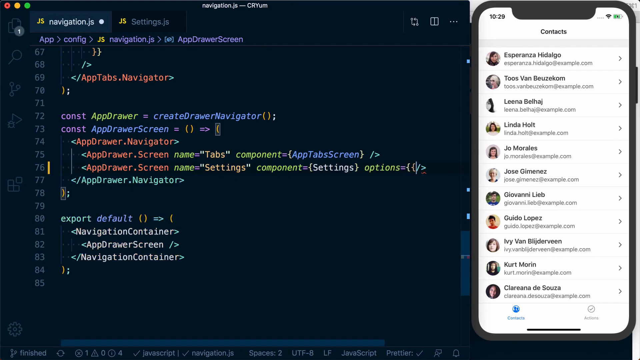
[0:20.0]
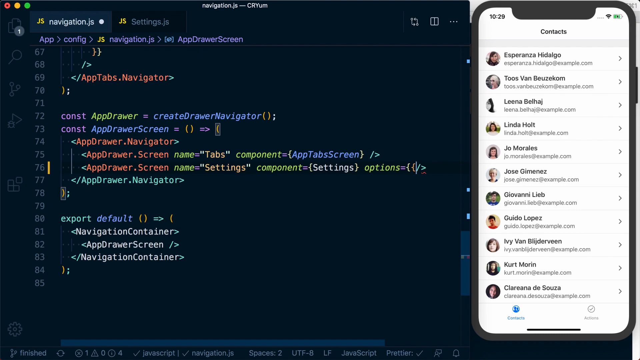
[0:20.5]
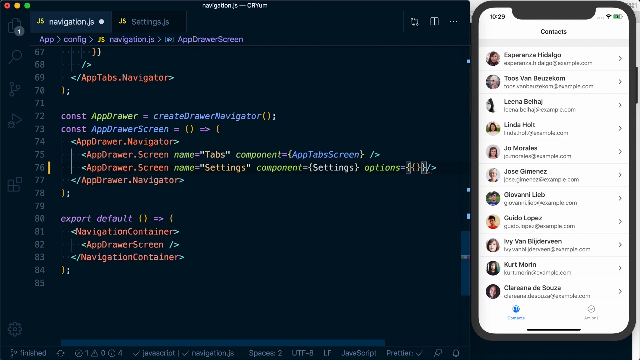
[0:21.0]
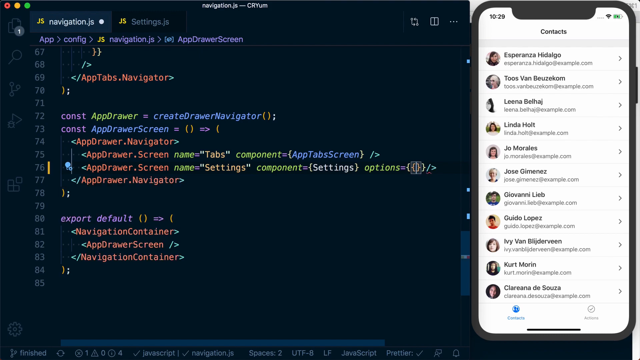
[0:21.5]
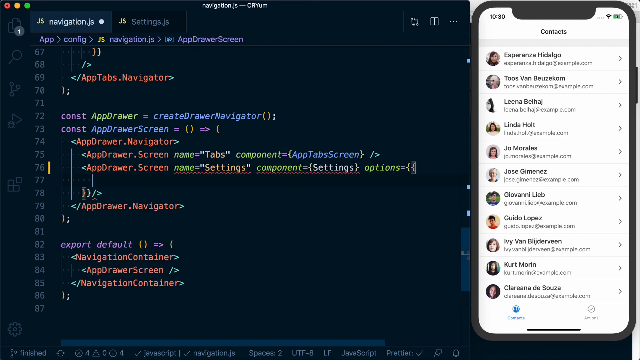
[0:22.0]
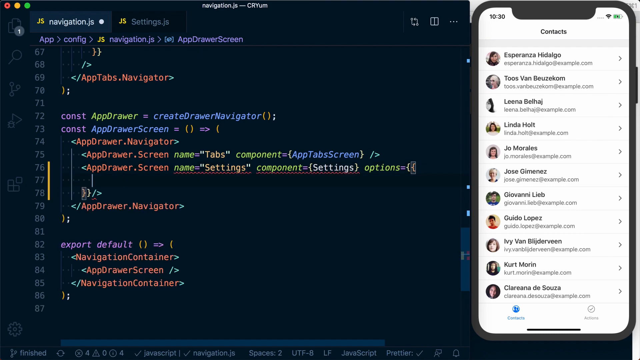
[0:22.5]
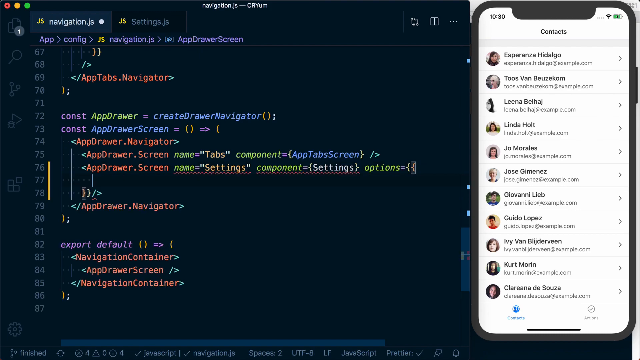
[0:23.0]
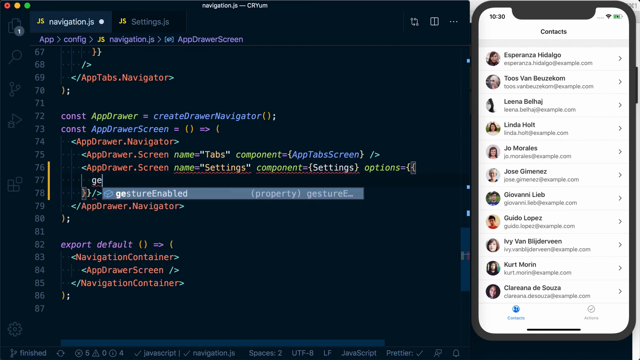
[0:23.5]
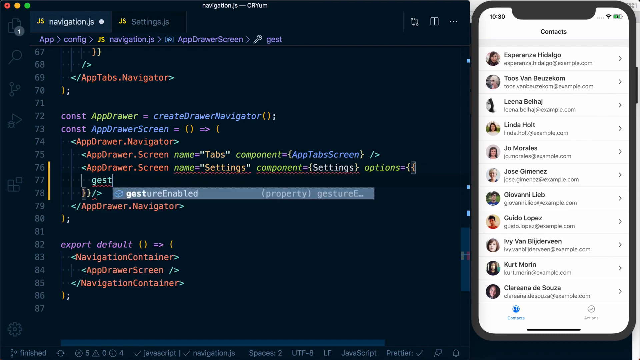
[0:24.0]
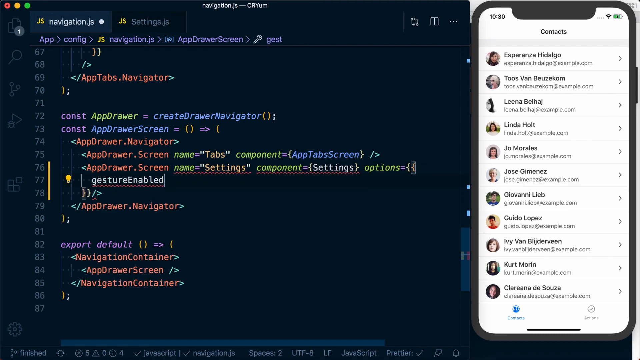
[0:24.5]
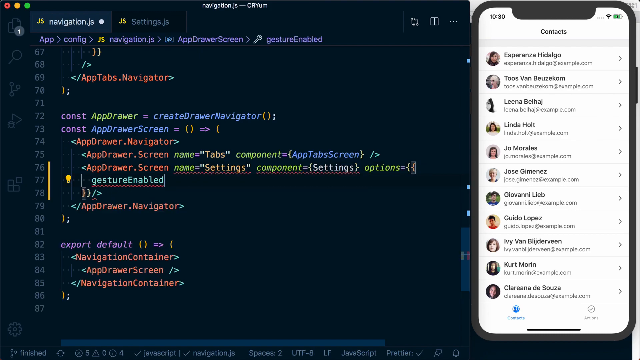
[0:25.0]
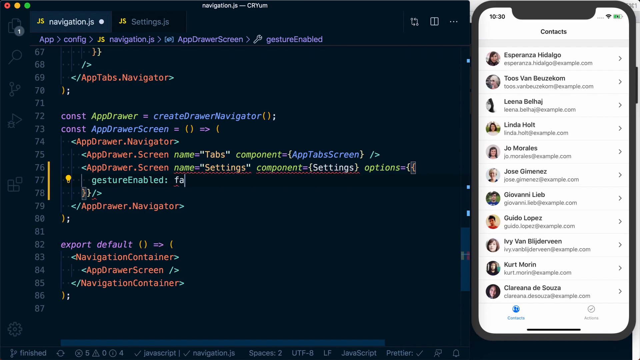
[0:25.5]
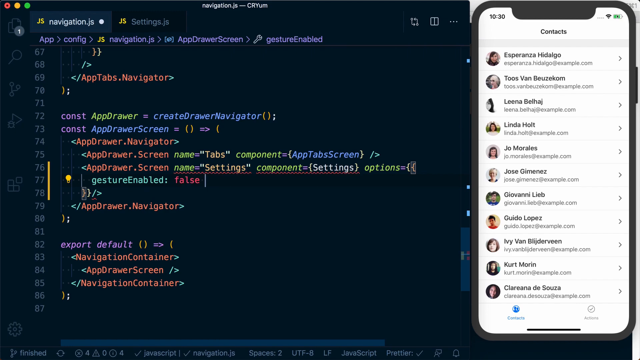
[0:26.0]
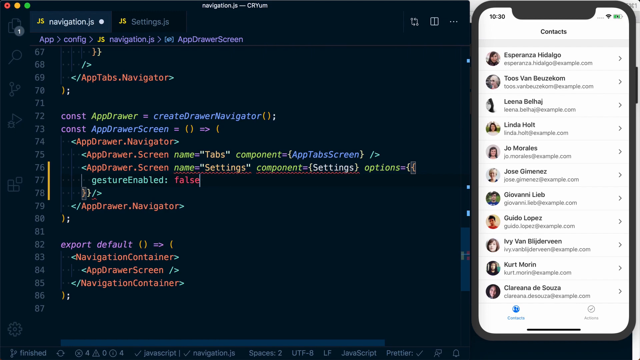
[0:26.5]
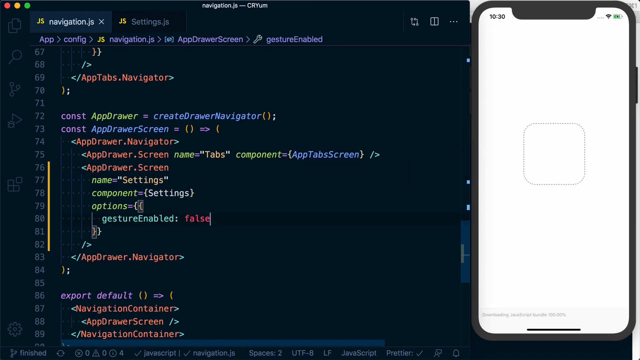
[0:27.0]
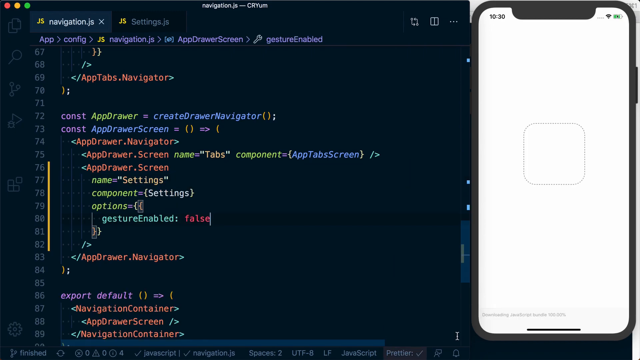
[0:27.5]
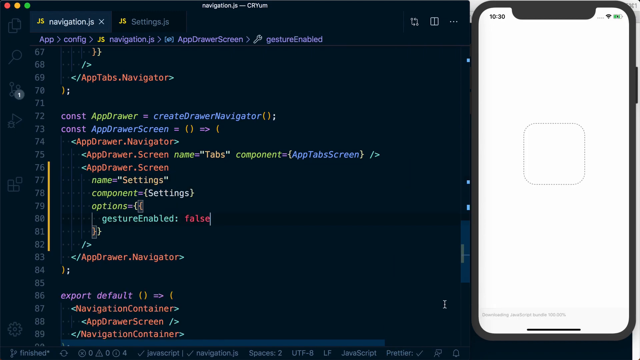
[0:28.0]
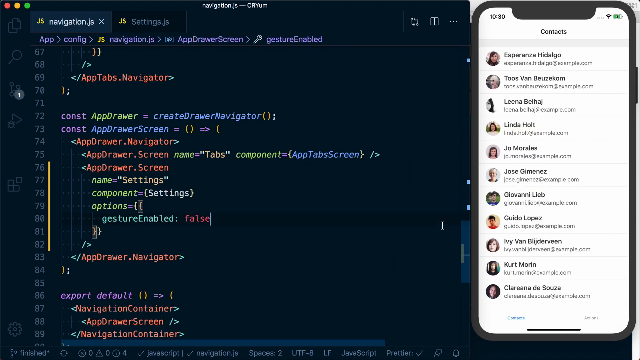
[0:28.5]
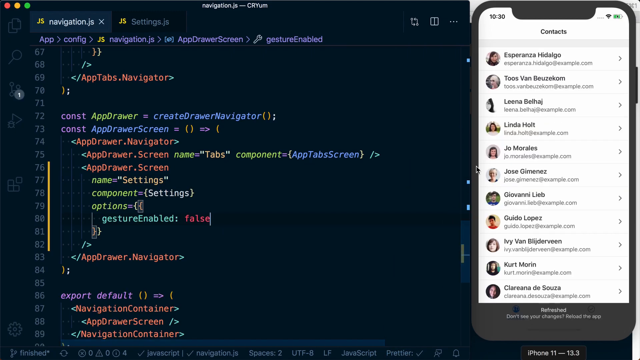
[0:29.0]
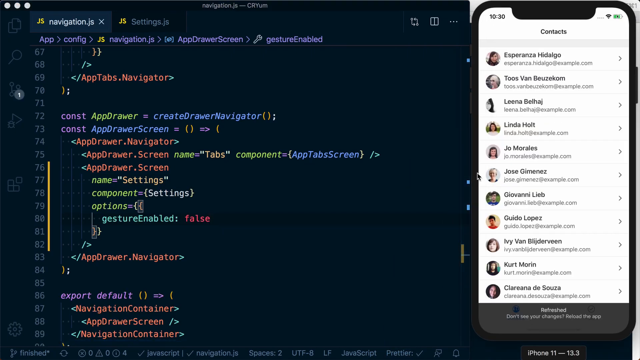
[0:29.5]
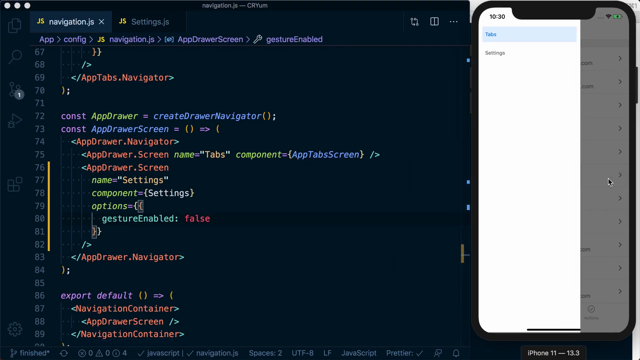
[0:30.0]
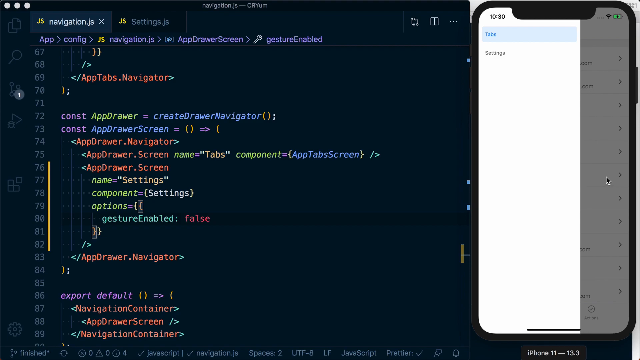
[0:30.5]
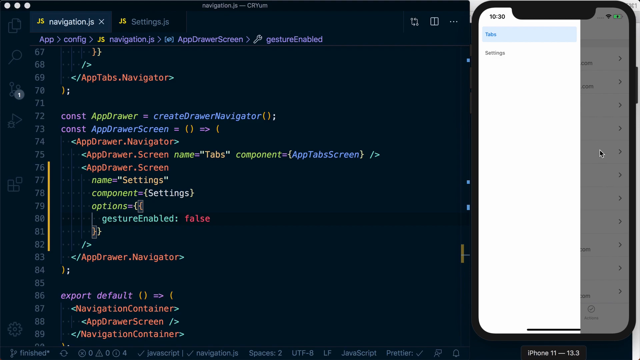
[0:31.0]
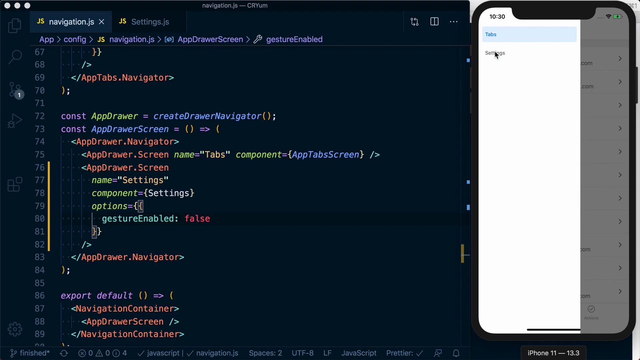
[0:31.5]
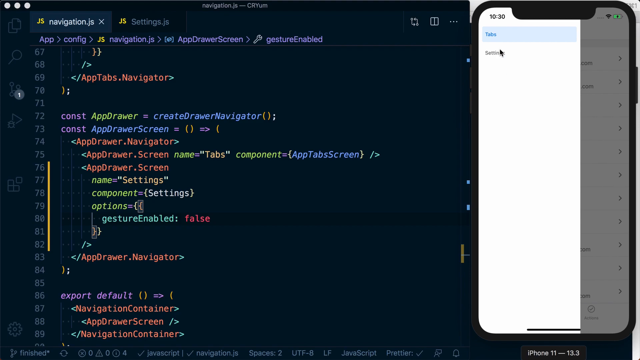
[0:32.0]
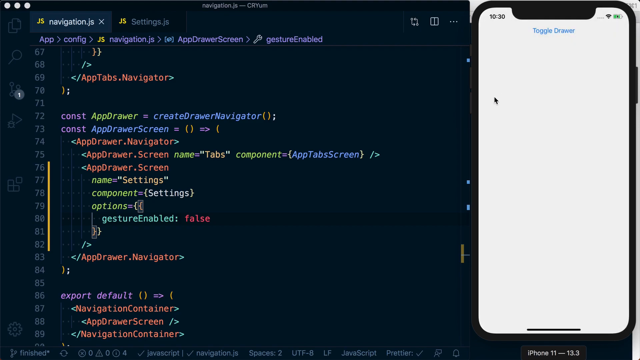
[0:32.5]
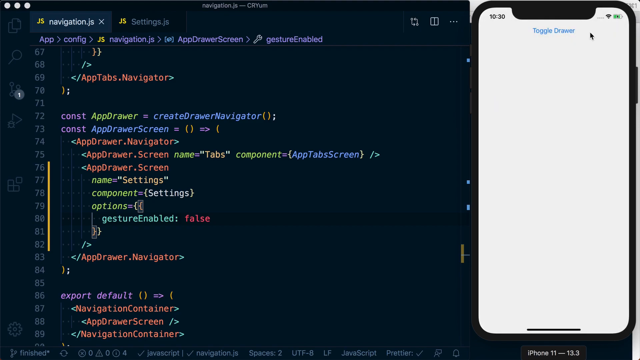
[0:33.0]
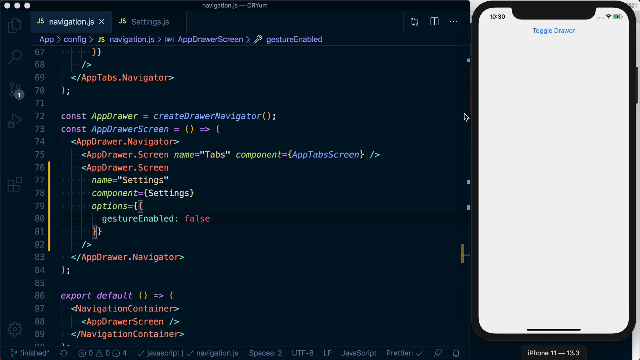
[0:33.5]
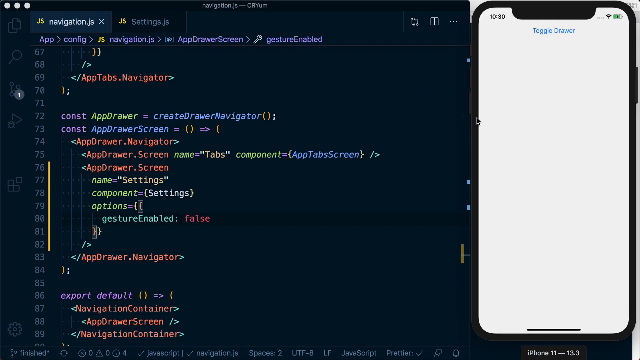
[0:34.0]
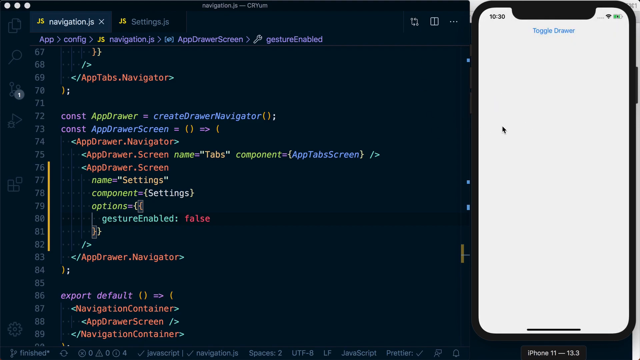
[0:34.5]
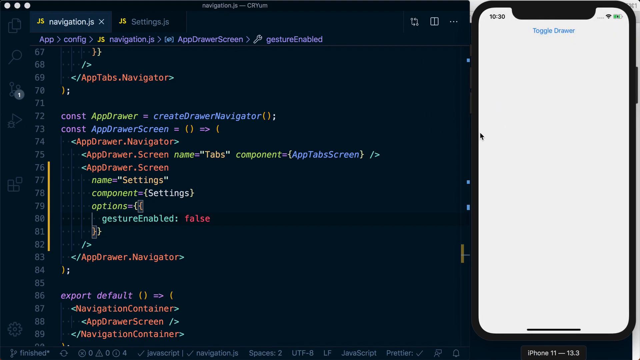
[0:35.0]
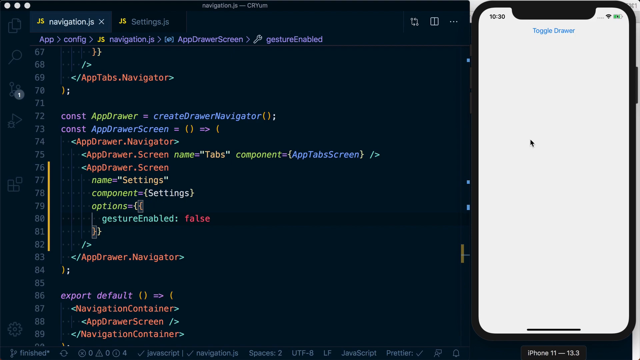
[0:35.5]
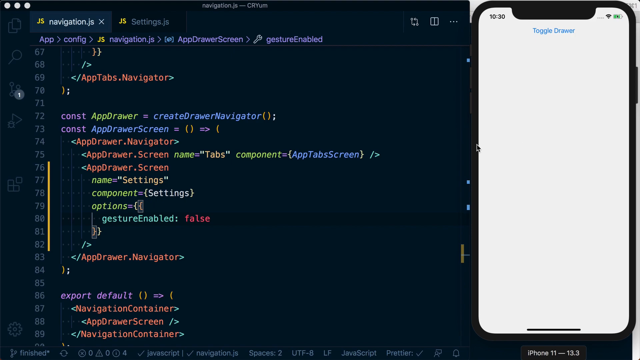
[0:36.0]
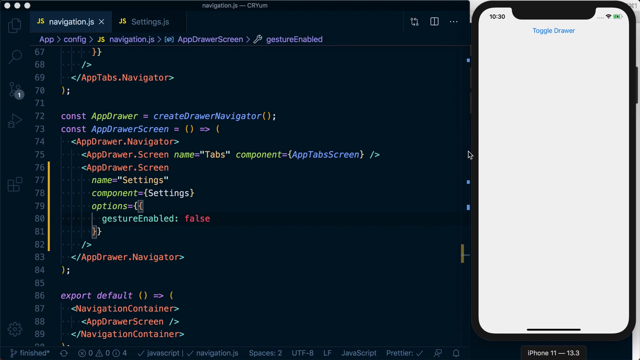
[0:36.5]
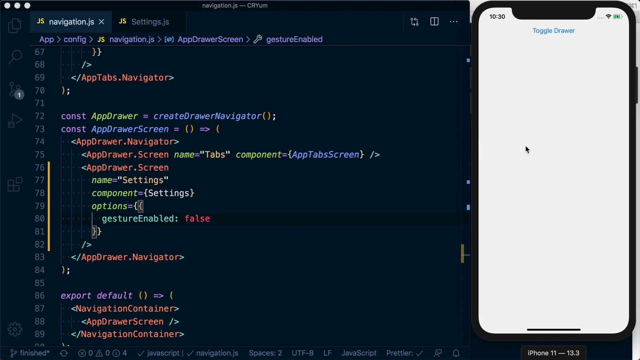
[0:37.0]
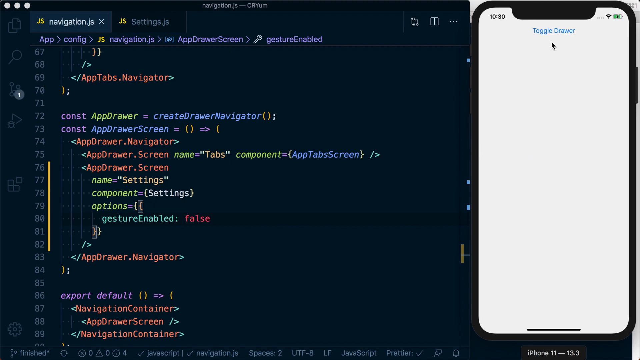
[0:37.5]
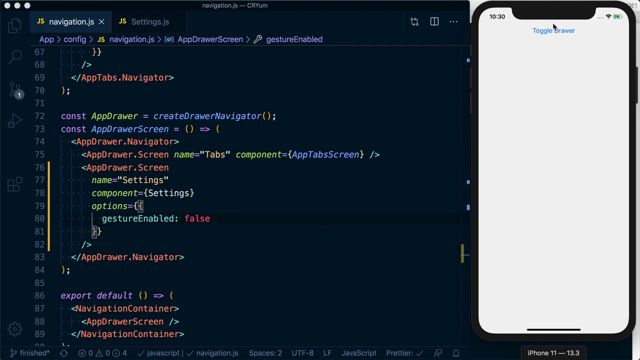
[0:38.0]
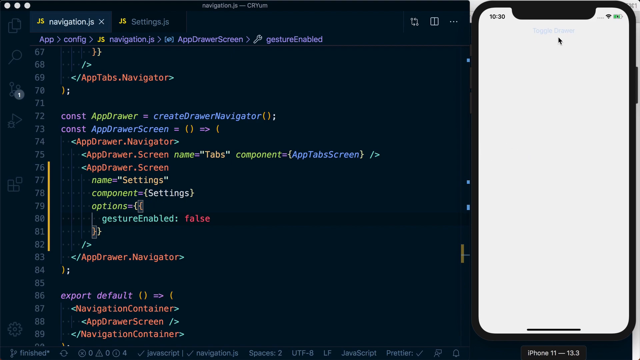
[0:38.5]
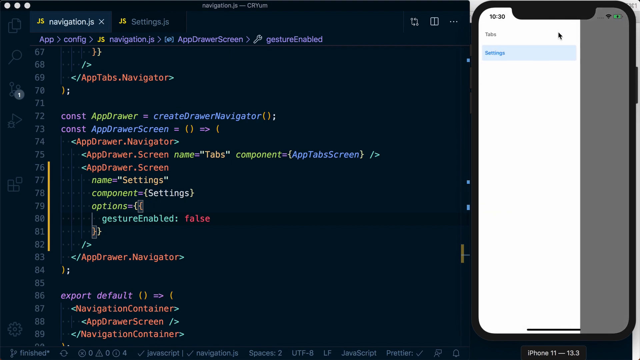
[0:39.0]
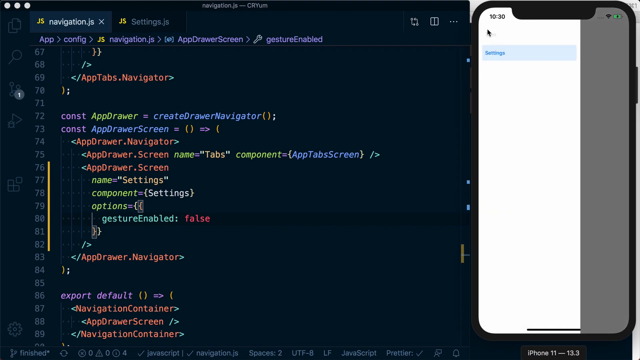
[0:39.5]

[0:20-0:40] Someone is teaching something to do with coding, working in a navigation tab on a black screen. On the right, their phone with its contacts is superimposed, and on the left is a coding screen with tabs at the top reading "navigation.js" and "settings.js". The very top apparently reads "navigation.js-cr yum". There is purple text mentioning the app drawer screen, and the code is in many different colors as they type and move things around in it. The cursor then goes over to the phone's toggle drawer, moving back and forth and hovering, and goes to tabs and settings. "toggle drawer" appears in blue at the top, but nothing else is on the phone screen. The person then clicks on something and the phone goes back to the contacts.